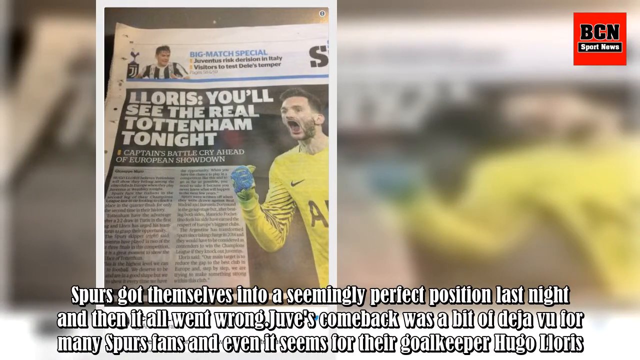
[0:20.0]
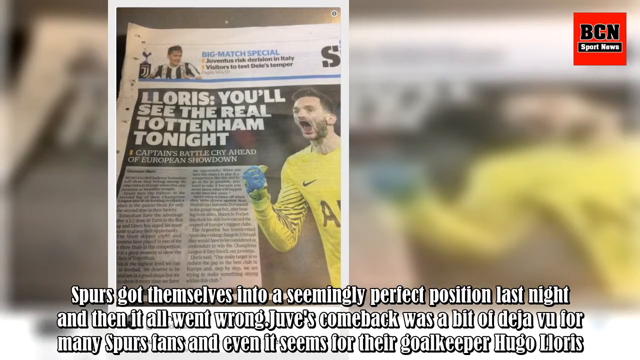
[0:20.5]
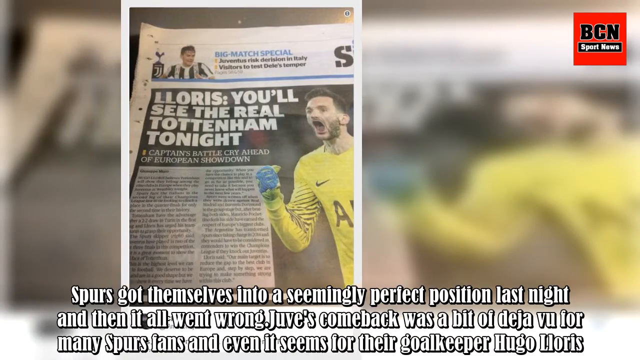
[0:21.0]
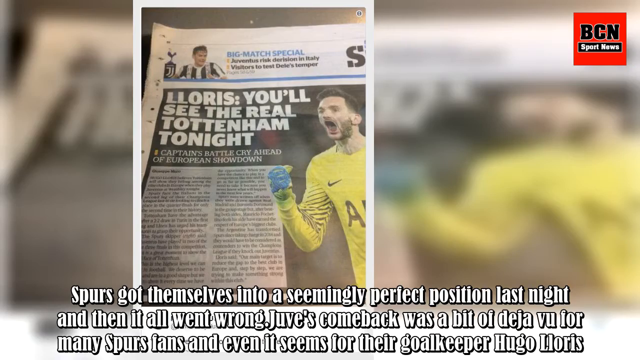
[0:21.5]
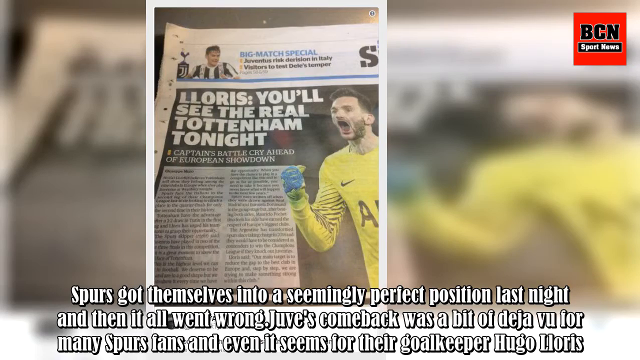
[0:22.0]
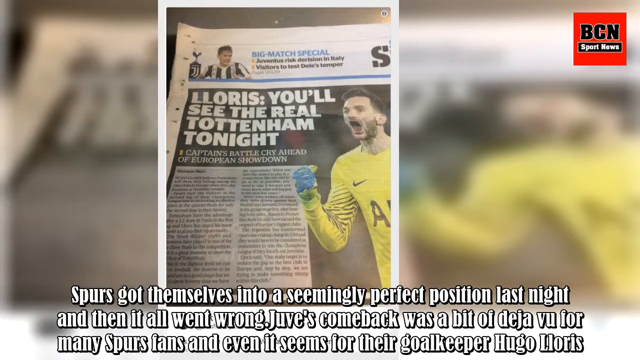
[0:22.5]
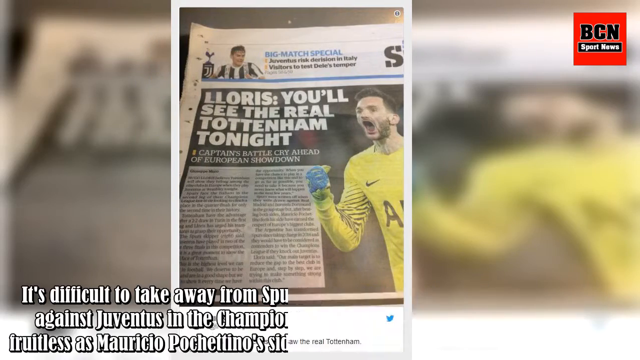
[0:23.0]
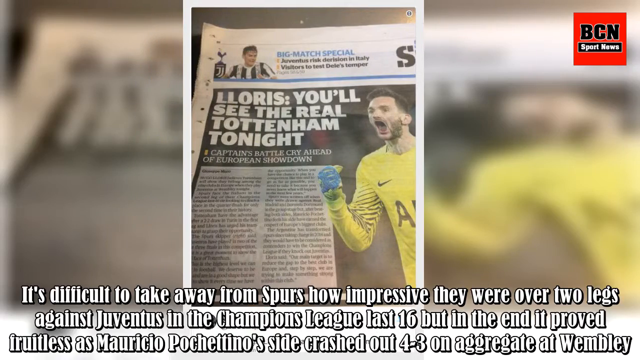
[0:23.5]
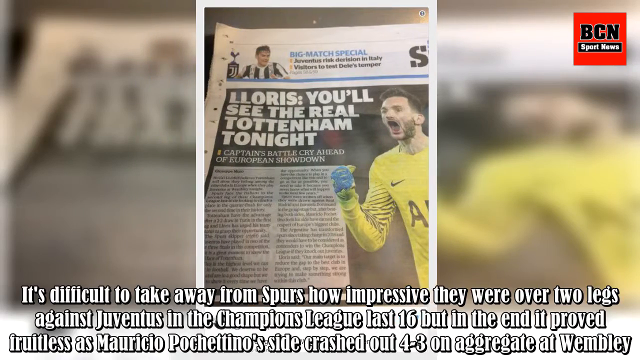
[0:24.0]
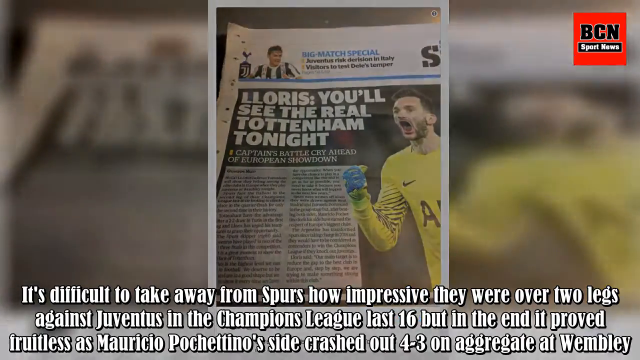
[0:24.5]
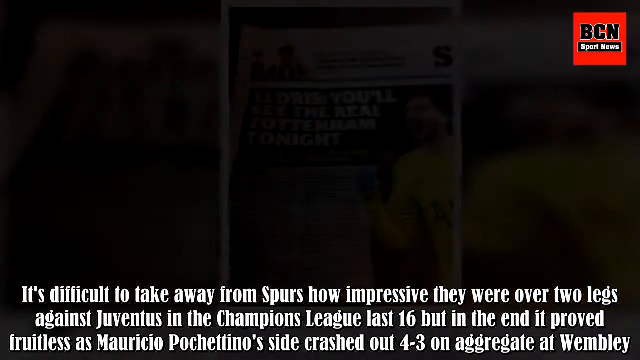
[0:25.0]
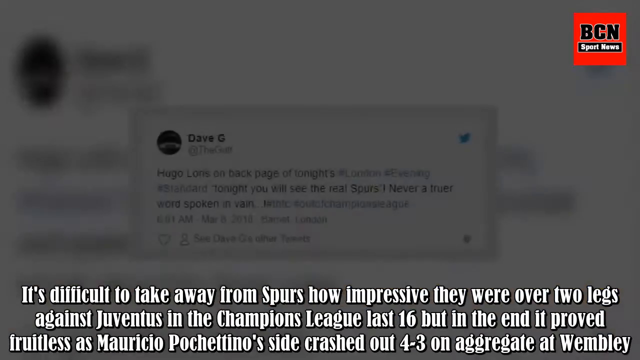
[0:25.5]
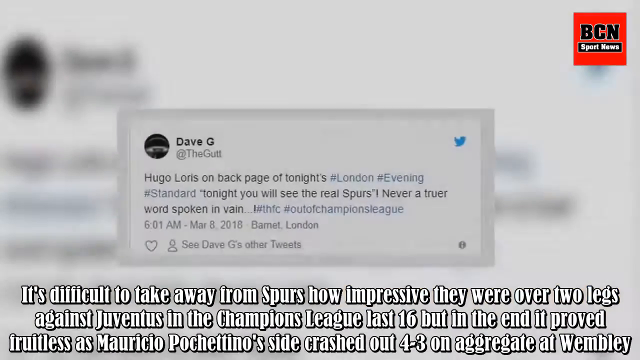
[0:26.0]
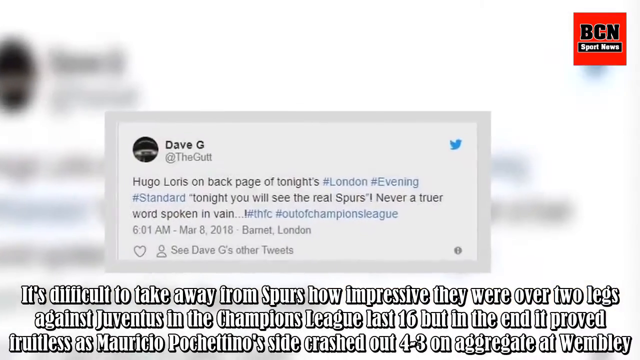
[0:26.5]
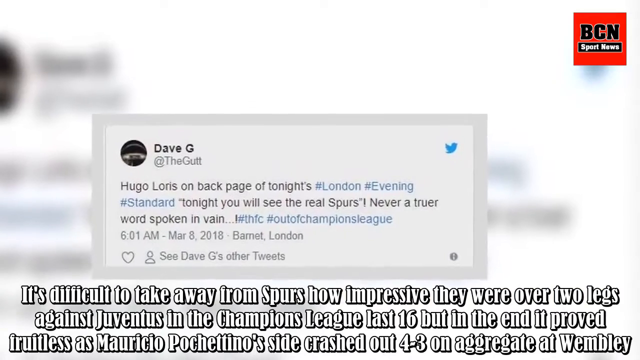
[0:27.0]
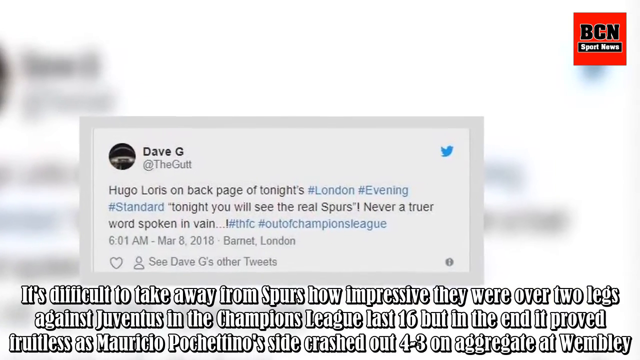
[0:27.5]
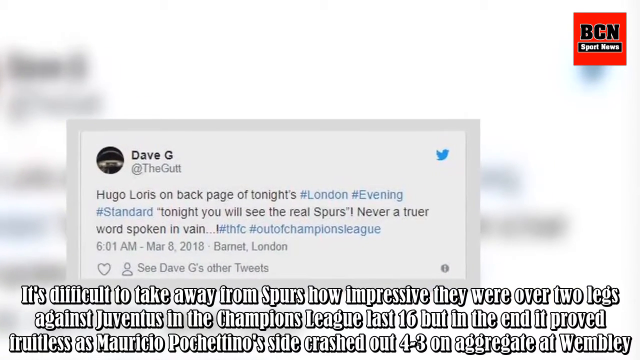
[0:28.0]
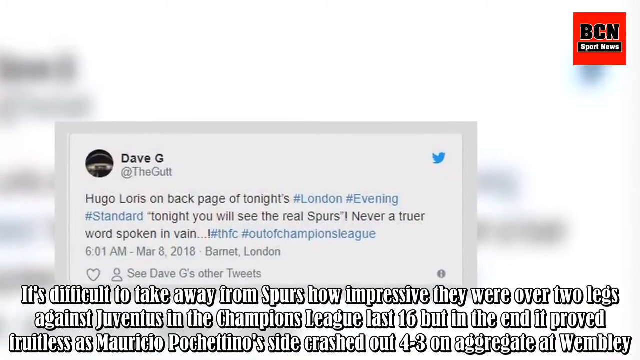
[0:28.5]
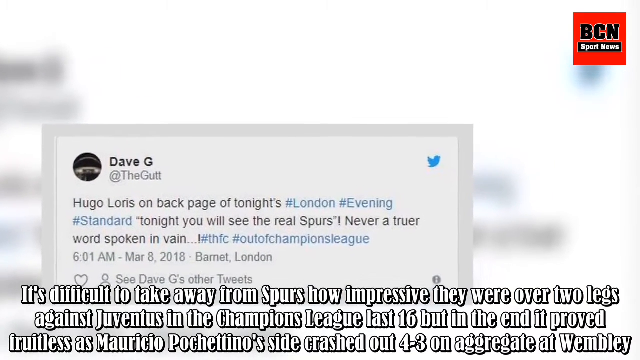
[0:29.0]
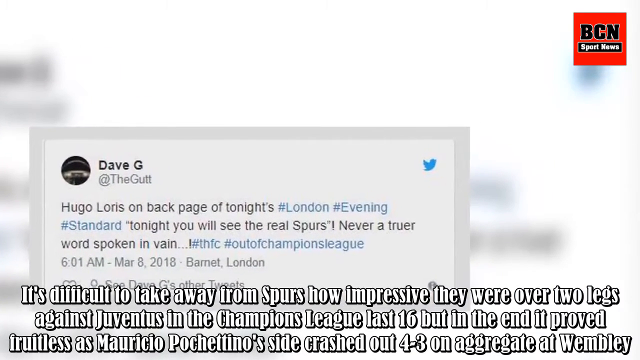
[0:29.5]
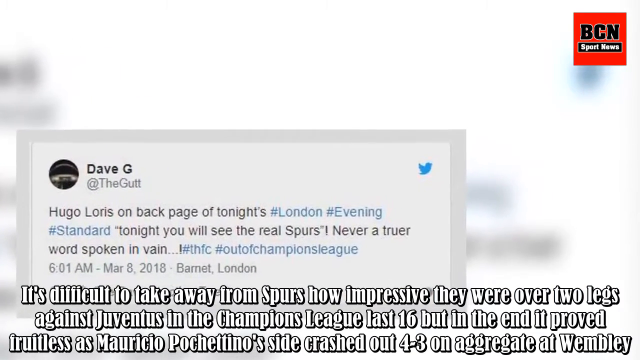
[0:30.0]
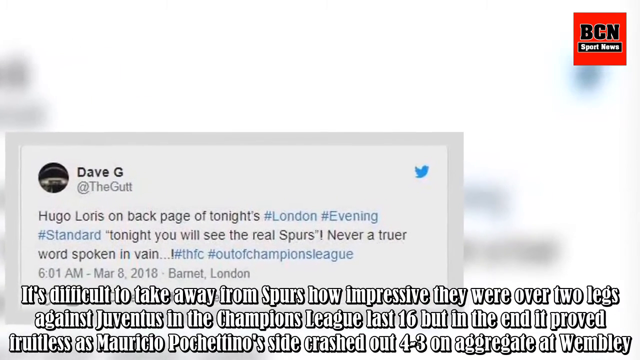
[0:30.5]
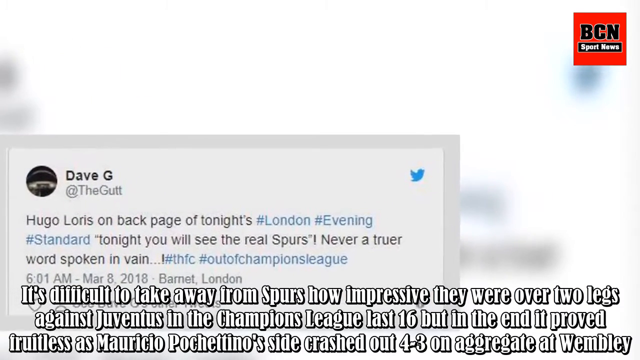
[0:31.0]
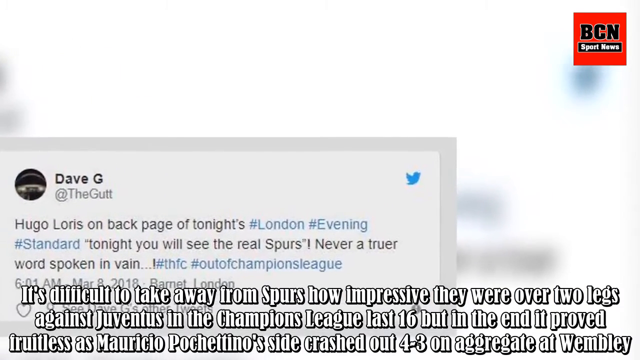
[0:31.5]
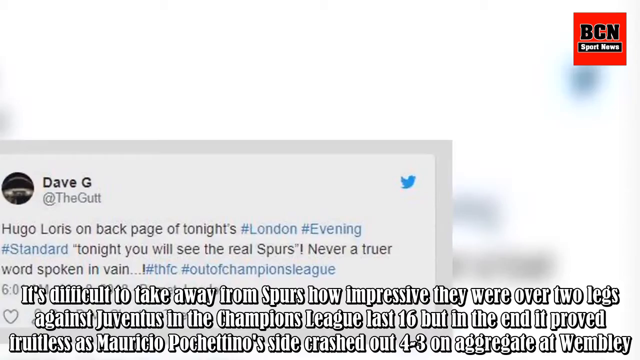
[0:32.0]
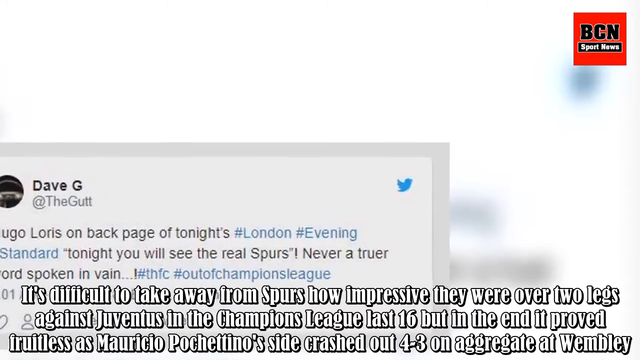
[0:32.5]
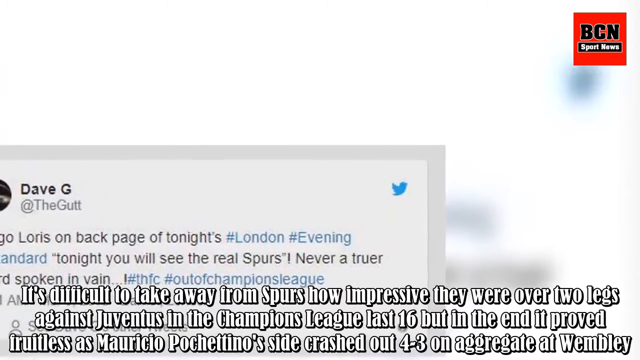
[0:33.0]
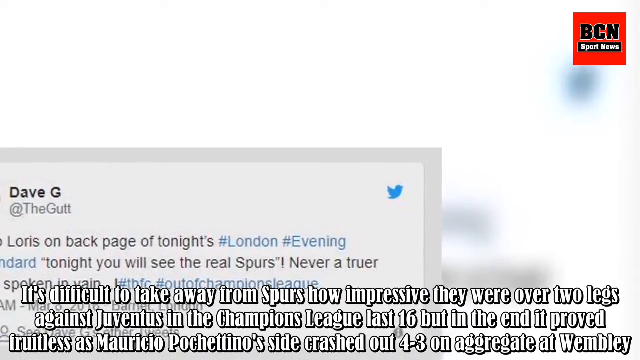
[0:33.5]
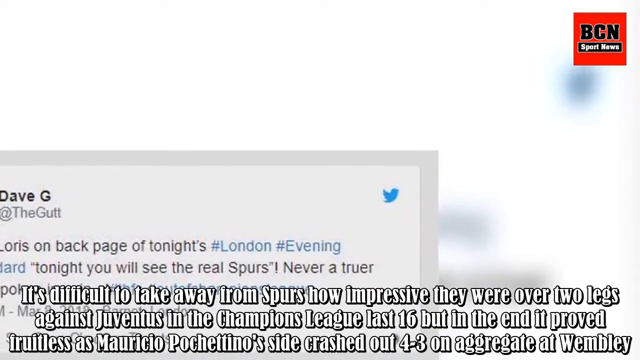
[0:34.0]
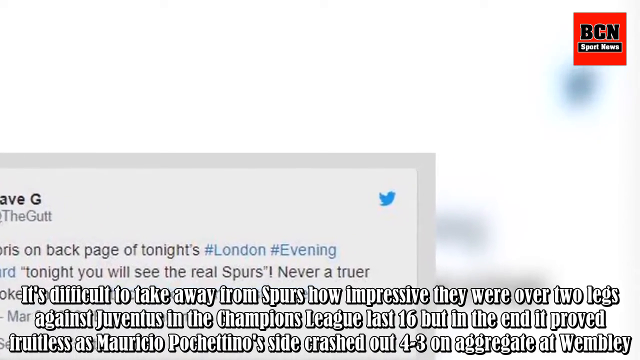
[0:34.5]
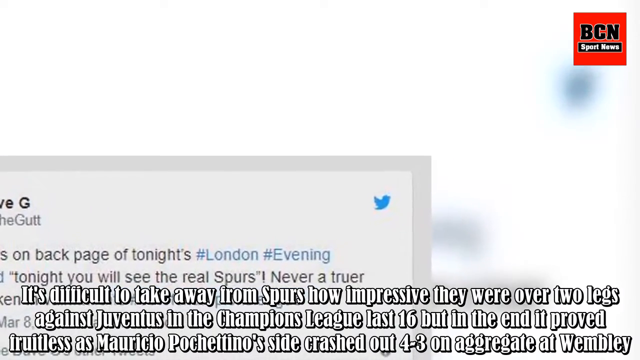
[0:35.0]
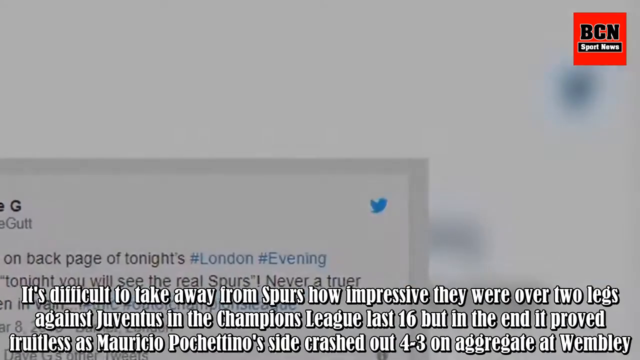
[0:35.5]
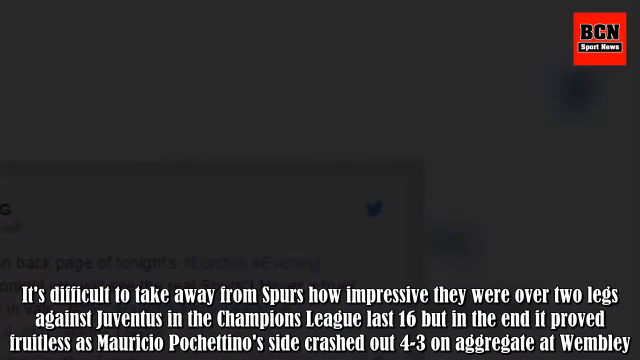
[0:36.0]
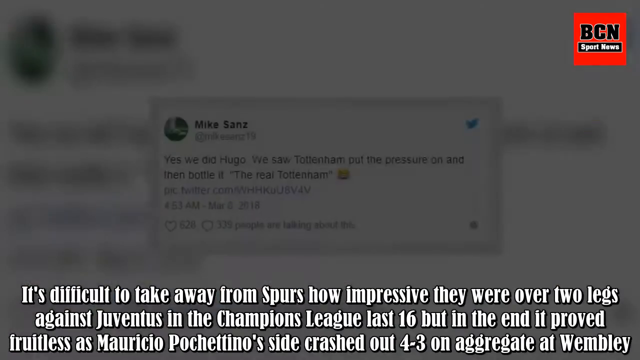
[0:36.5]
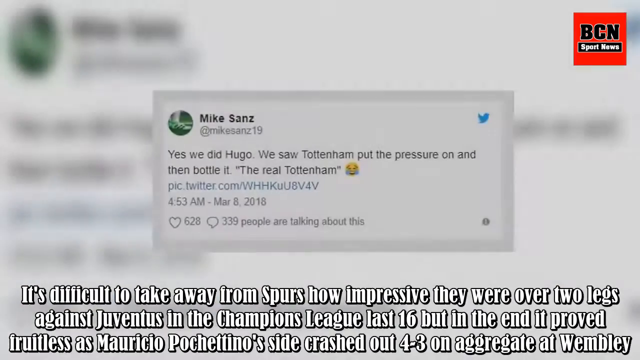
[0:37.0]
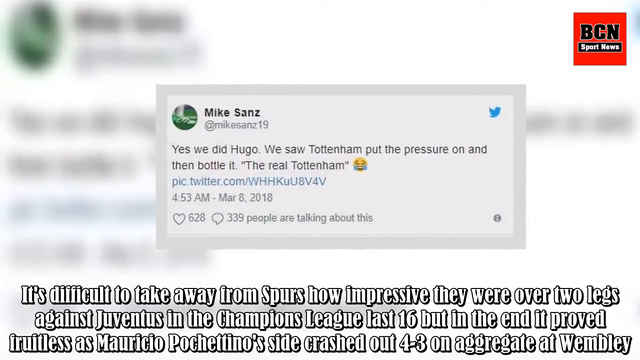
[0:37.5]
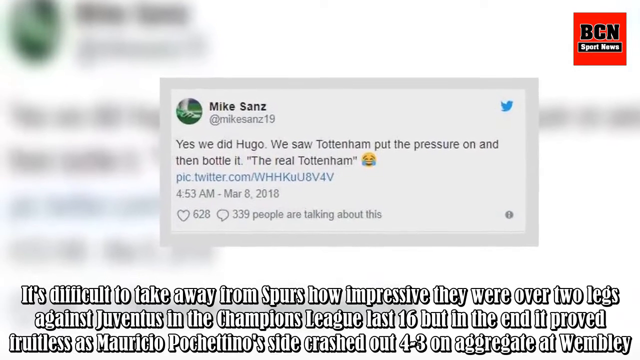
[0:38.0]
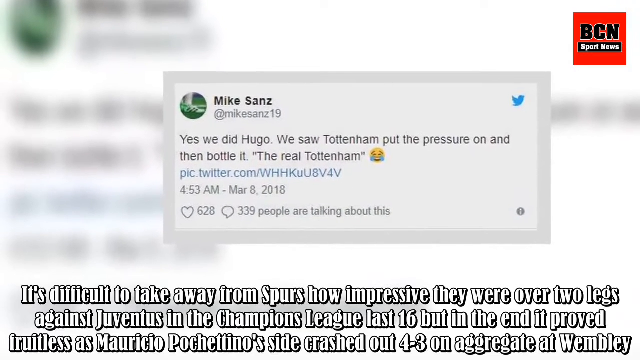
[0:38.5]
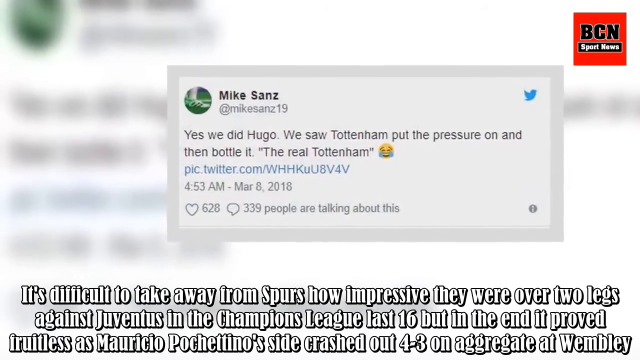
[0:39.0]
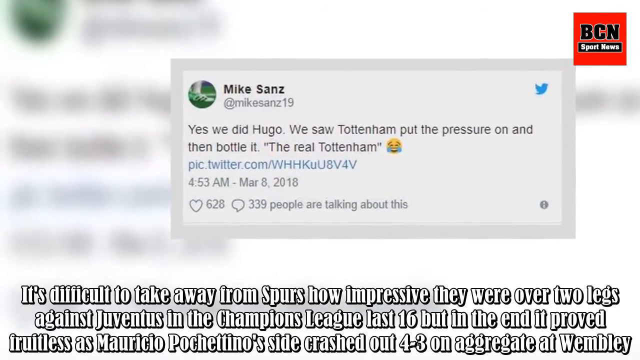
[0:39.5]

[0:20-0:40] The newspaper front page continues moving to the right until it is in the center, and the captions at the bottom change to read: "it's difficult to take away from Spurs how impressive they were over two legs against Juventus in the Champions League last 16, but in the end it proved fruitless as Mauricio Pochettino's side crashed out 4-3 on aggregate at Wembley." A tweet from someone named Dave G, posted on March 8th 2018, appears on the left side and moves closer to the viewer. Then another tweet, by Mike Sands and also posted on March 8th, 2018, appears and moves to the right side.